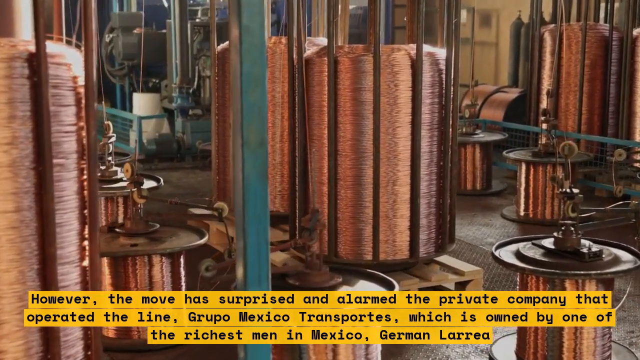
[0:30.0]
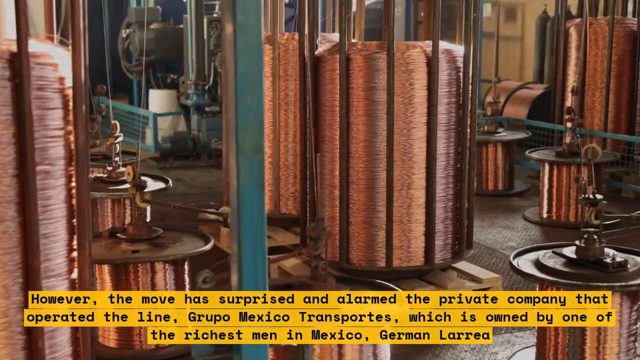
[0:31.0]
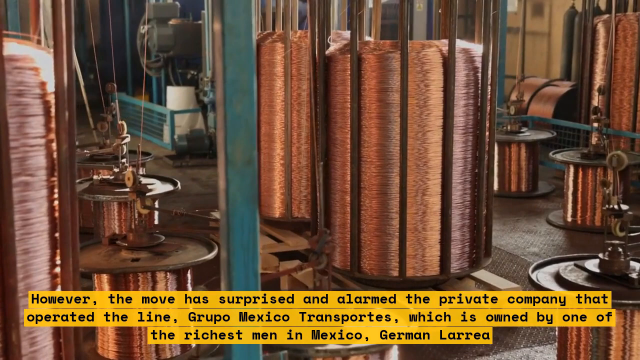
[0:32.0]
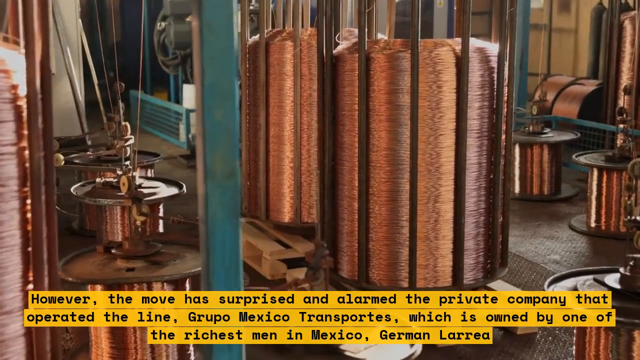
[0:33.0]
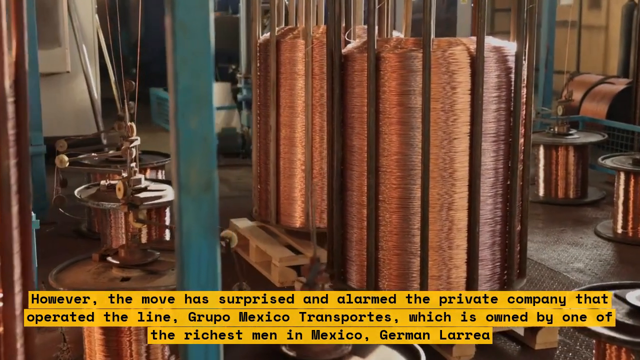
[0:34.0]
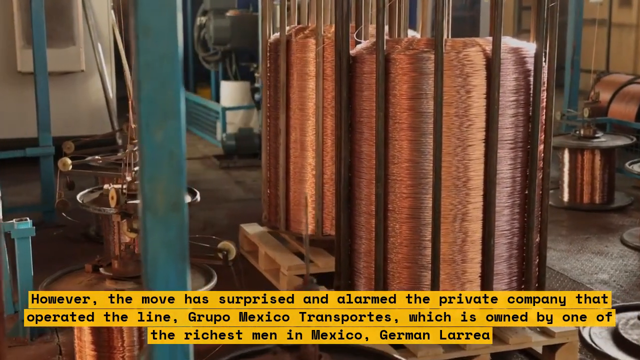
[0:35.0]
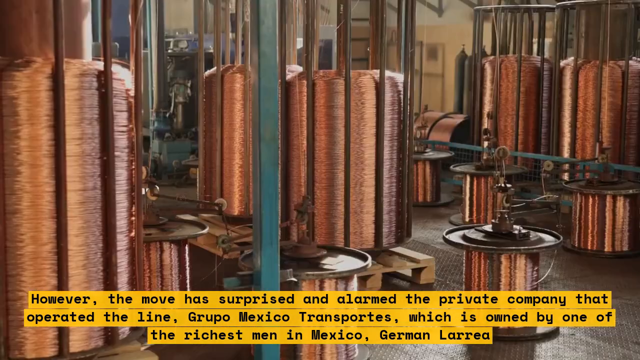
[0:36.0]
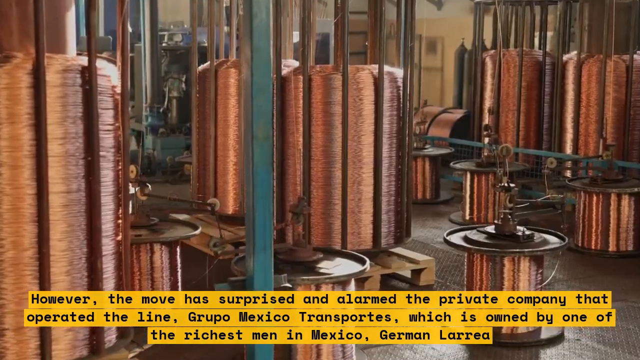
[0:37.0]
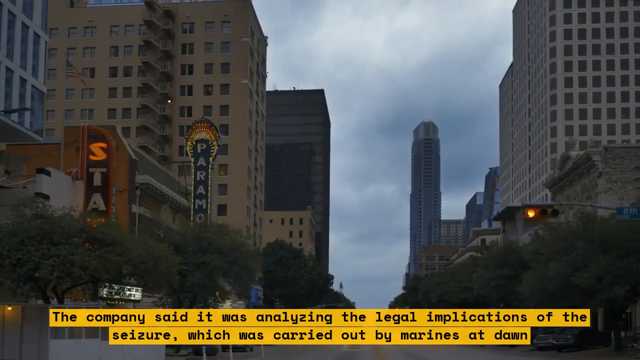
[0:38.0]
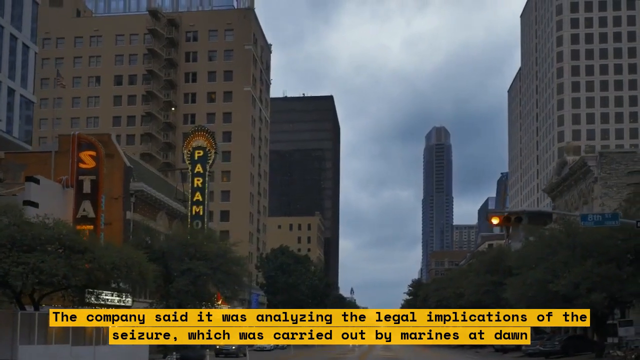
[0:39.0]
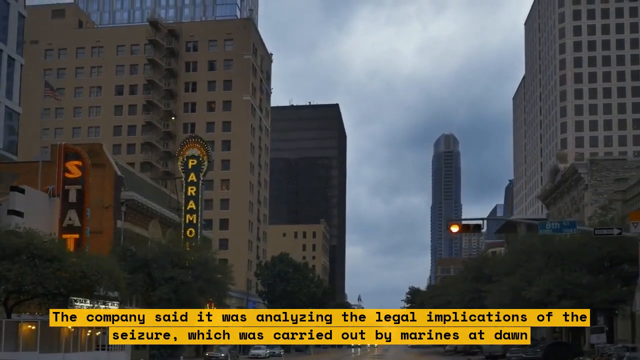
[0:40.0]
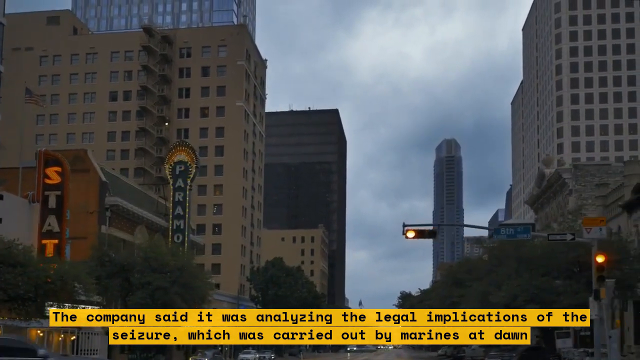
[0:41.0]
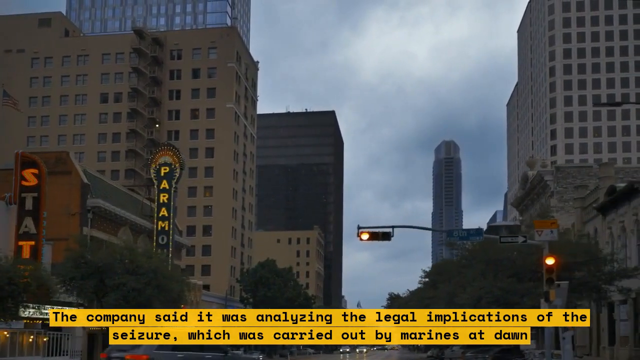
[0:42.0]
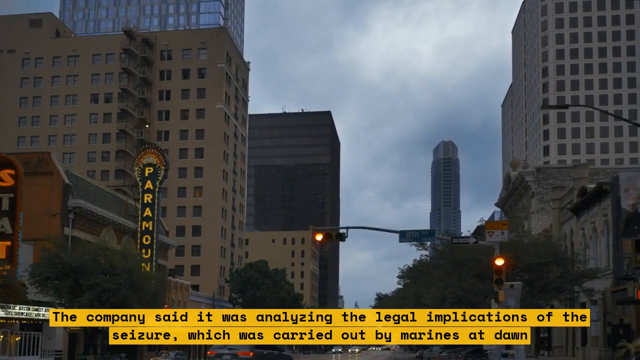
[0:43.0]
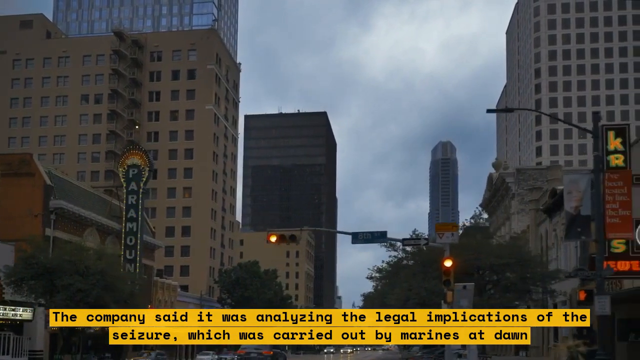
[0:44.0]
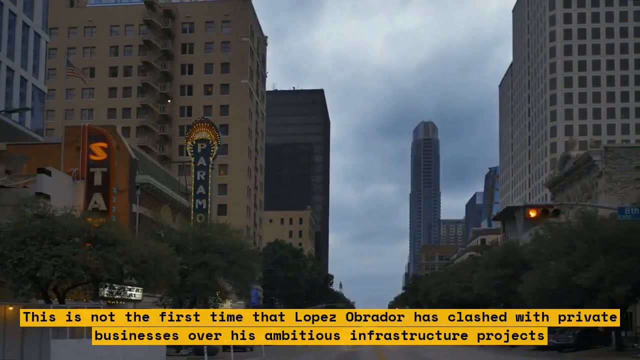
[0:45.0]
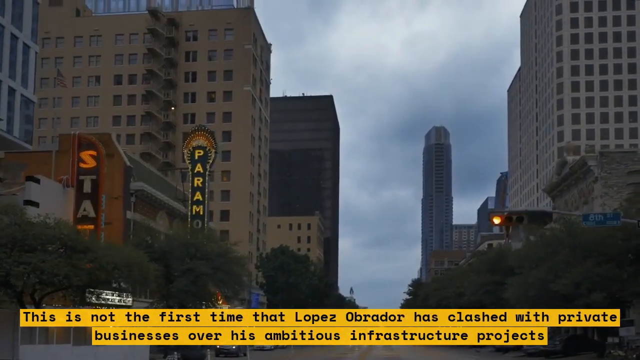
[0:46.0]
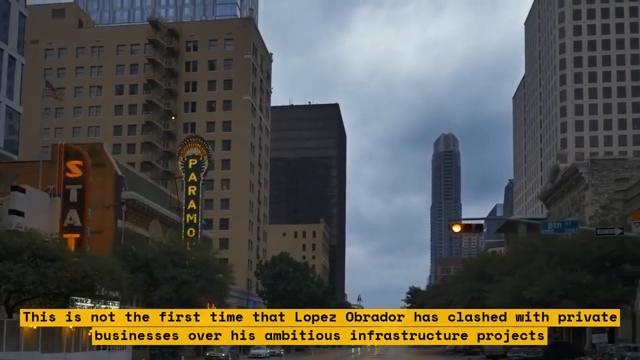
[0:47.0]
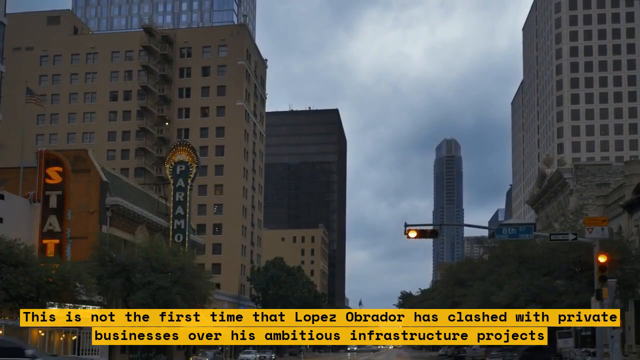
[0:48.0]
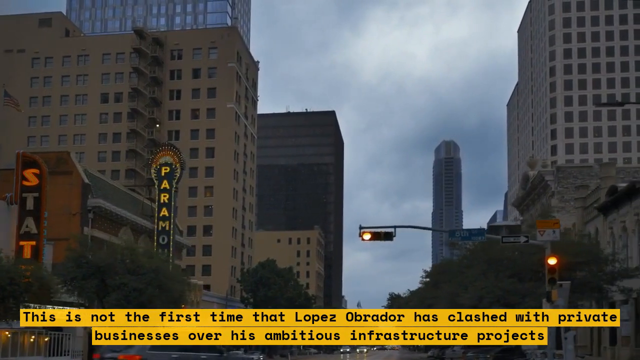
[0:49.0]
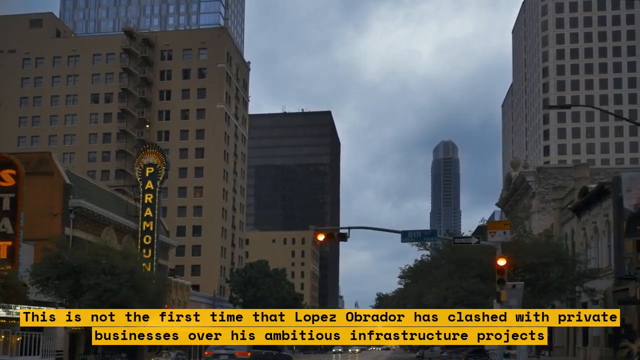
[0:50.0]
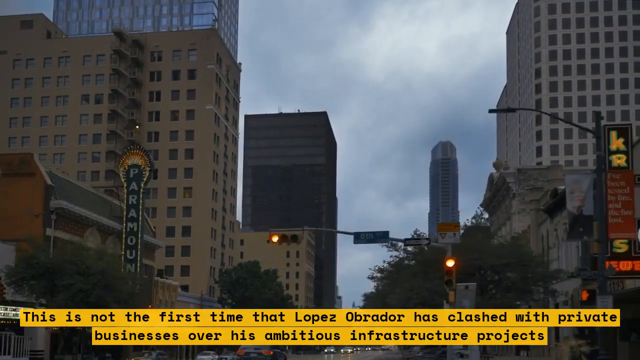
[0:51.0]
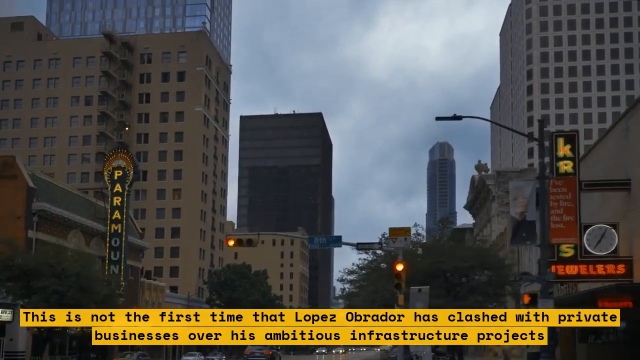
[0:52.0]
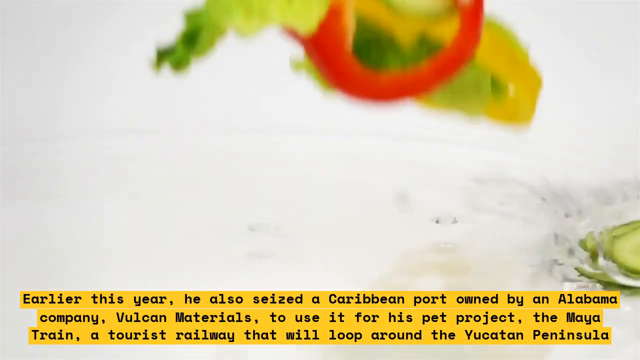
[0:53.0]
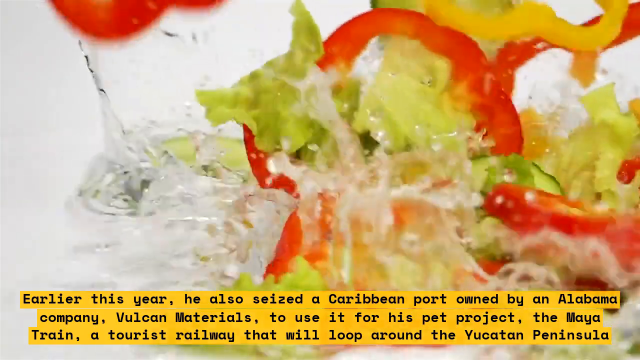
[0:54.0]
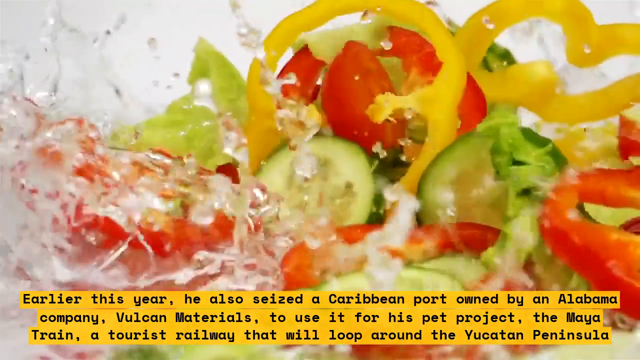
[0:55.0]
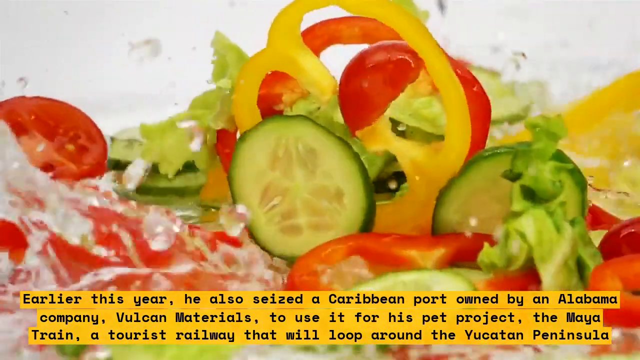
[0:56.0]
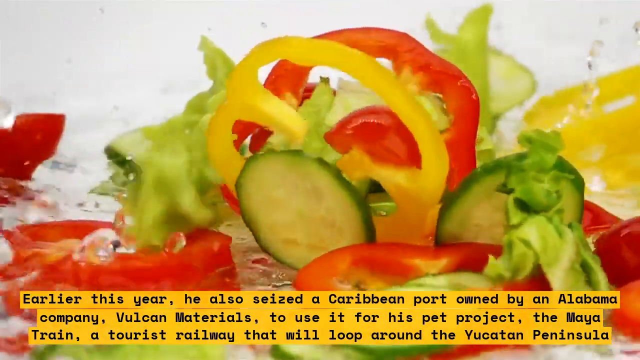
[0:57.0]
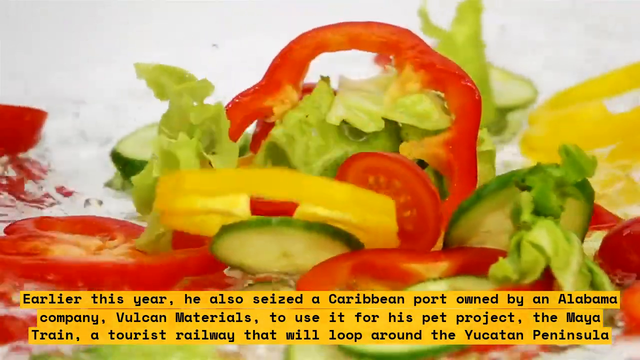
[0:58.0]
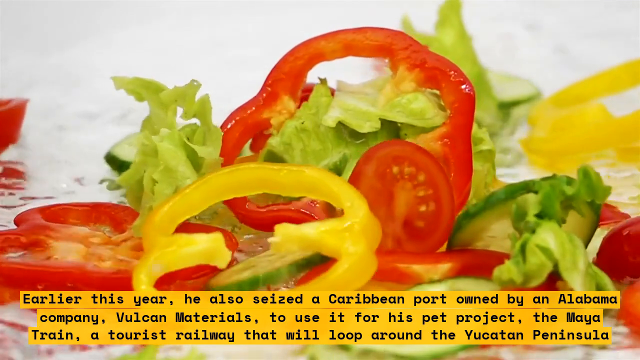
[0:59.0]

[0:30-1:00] Many copper coils continue to fill the view of the area, and the screen still shows the text: "however, the move has surprised and alarmed the private company that operated the line, Grupo Mexico Transport, which is owned by one of the richest men in Mexico, German Larrea." An outside view of what appears to be part of a city follows, with text reading: "the company said it was analyzing the legal implications of the seizure which was carried out by Marines at dawn." Taller buildings are shown, apparently on a street called 8th Street; the buildings have a lot of windows and appear to be about average size. Next, text reads: "earlier this year, he has also seized a Caribbean port owned by an Alabama company, Vulcan Materials, to use it for his pet project, the Maya Train, a tourist railway that will loop around the Yucatan Peninsula." As these words appear, different vegetables are shown on the screen, which look like green peppers, red peppers, and possibly some tomatoes.